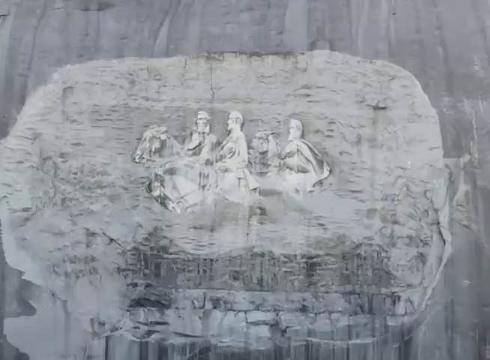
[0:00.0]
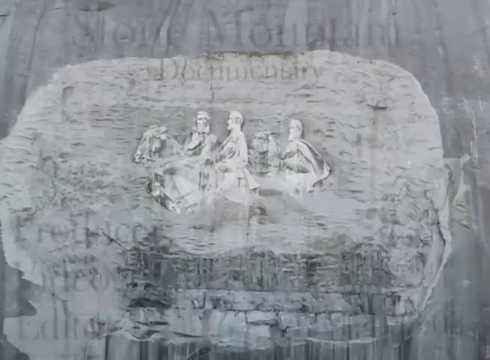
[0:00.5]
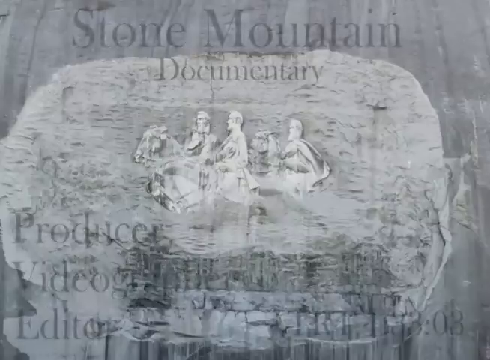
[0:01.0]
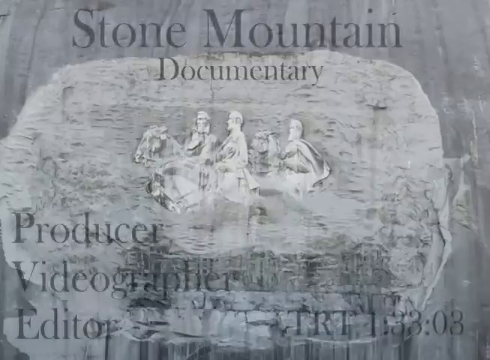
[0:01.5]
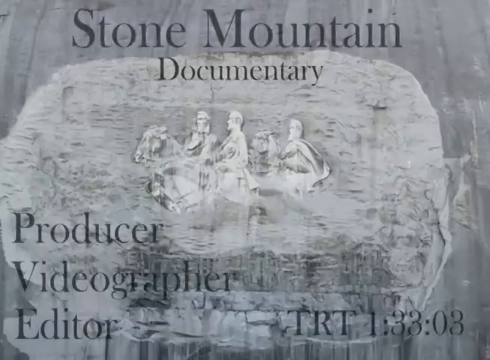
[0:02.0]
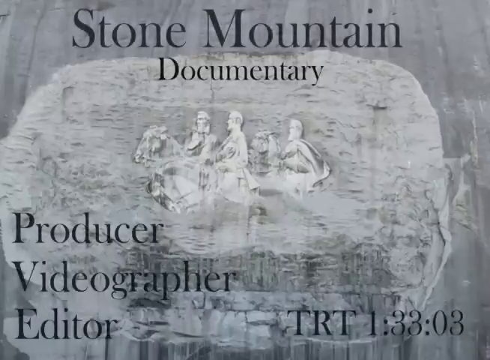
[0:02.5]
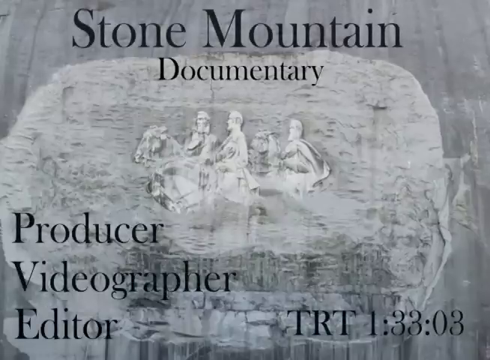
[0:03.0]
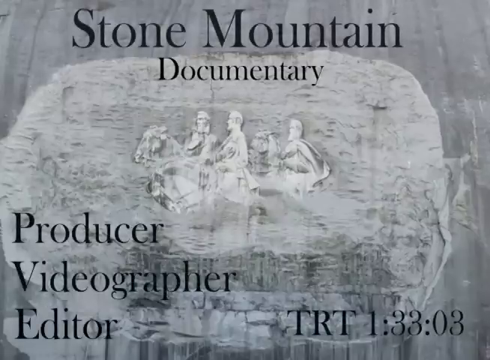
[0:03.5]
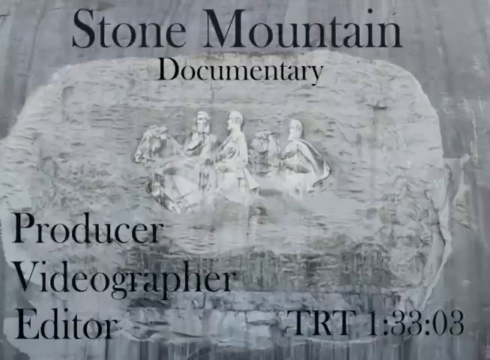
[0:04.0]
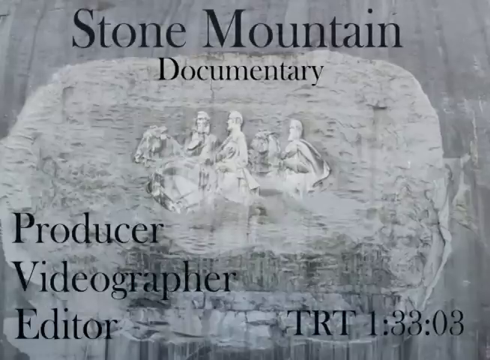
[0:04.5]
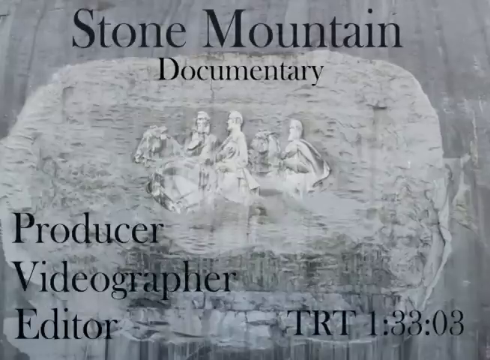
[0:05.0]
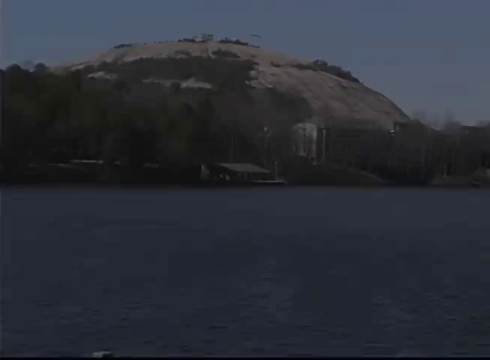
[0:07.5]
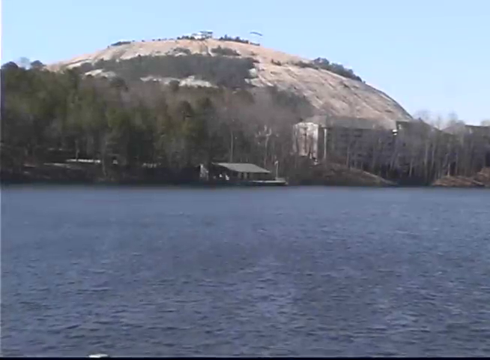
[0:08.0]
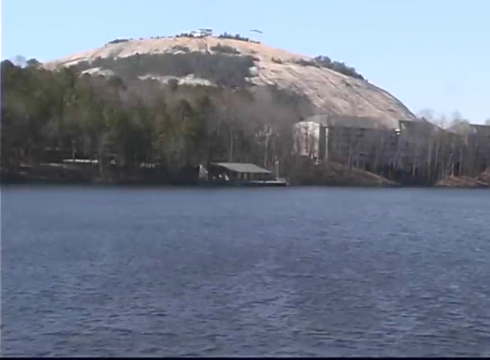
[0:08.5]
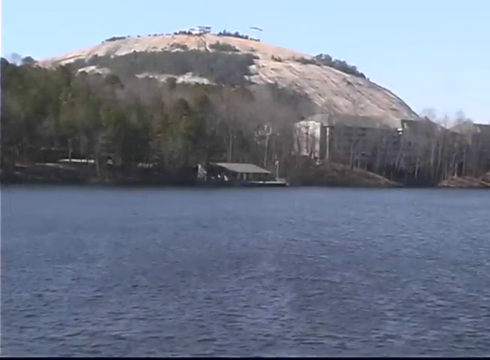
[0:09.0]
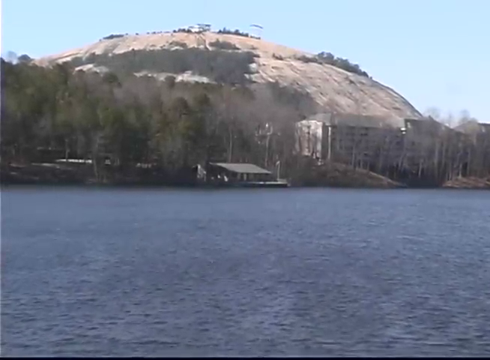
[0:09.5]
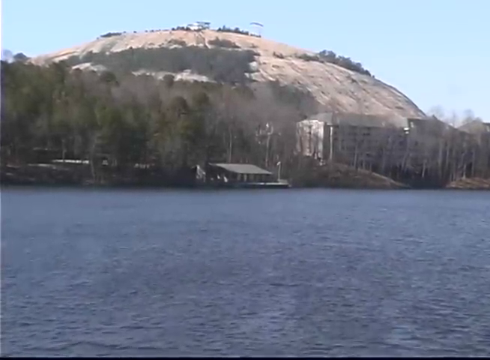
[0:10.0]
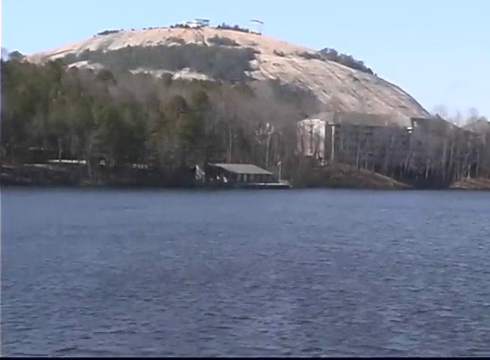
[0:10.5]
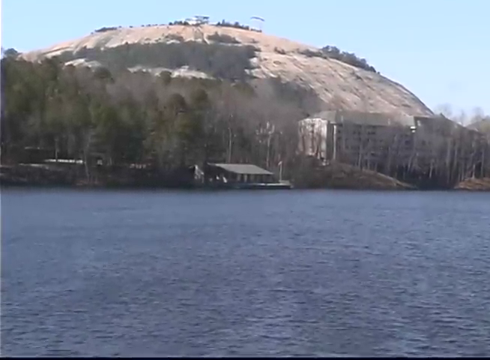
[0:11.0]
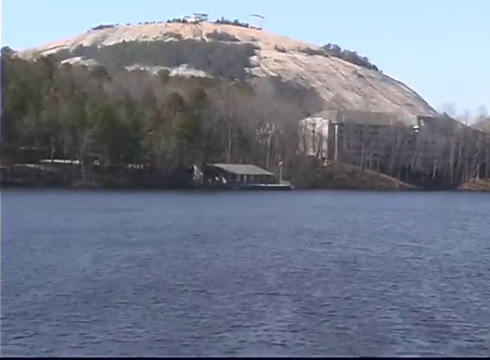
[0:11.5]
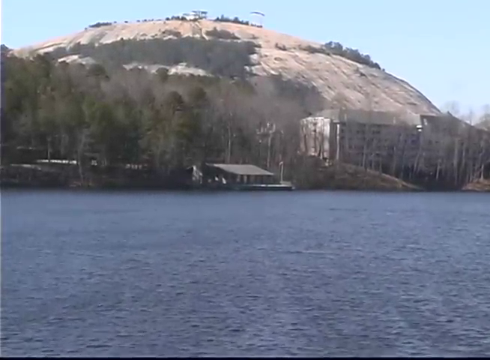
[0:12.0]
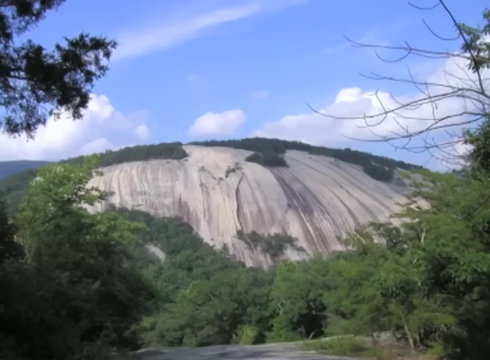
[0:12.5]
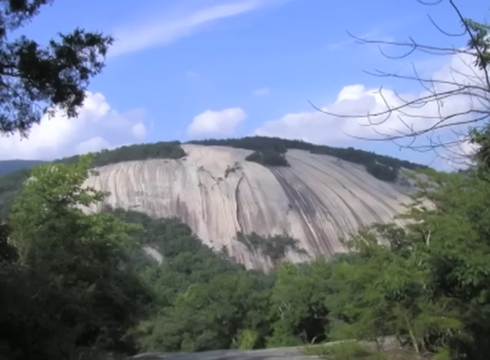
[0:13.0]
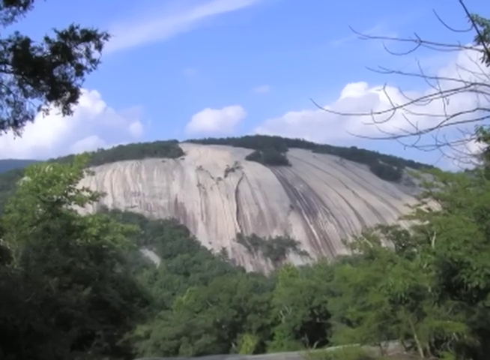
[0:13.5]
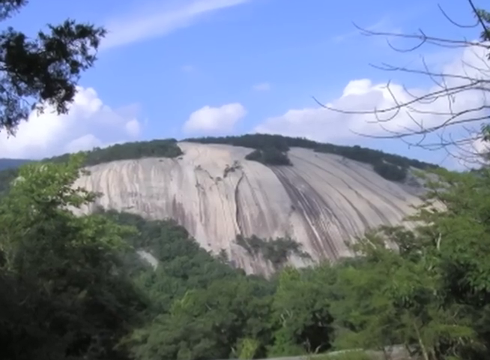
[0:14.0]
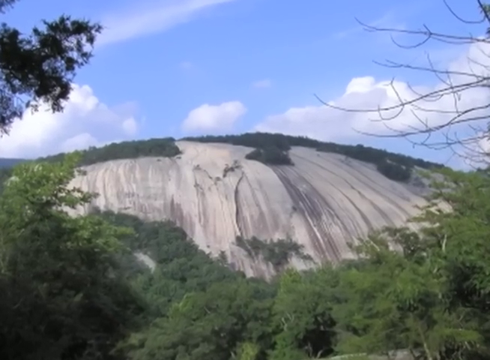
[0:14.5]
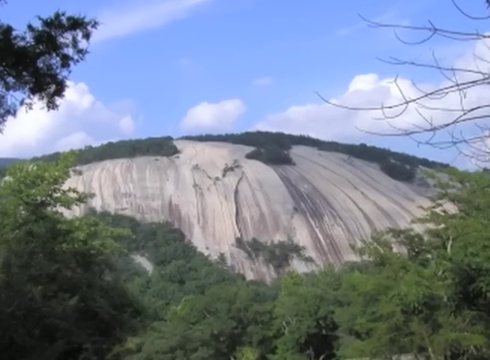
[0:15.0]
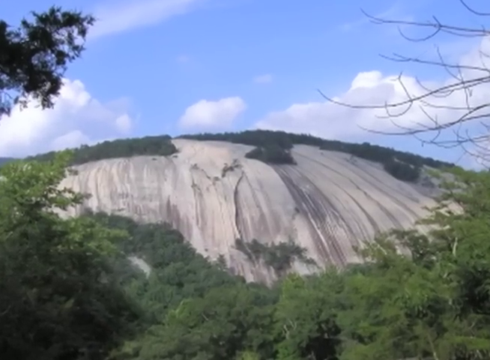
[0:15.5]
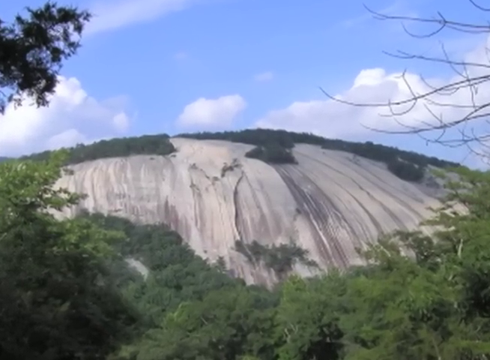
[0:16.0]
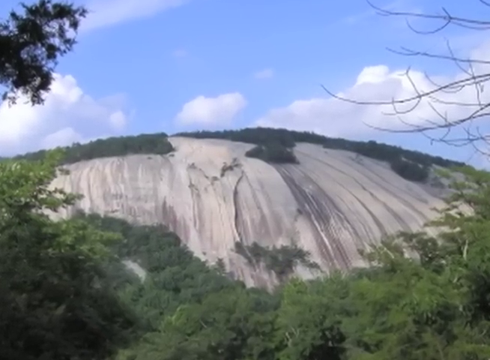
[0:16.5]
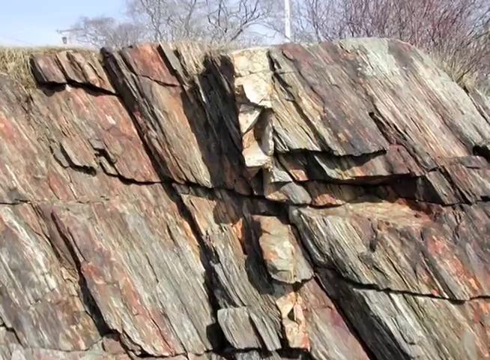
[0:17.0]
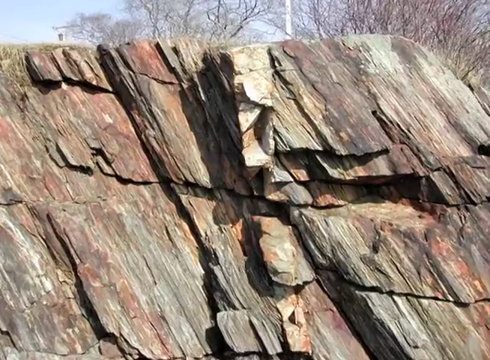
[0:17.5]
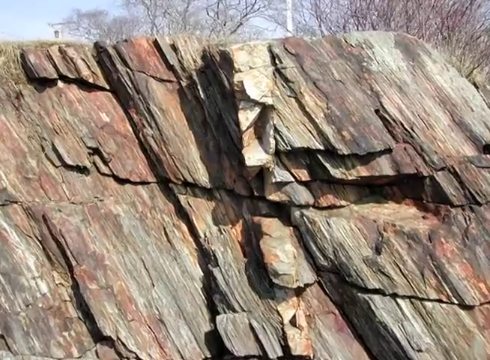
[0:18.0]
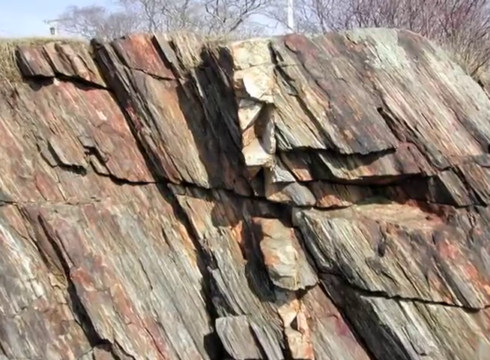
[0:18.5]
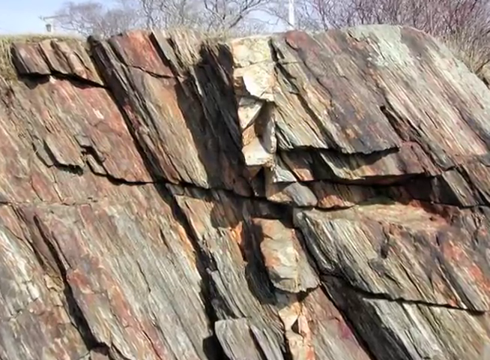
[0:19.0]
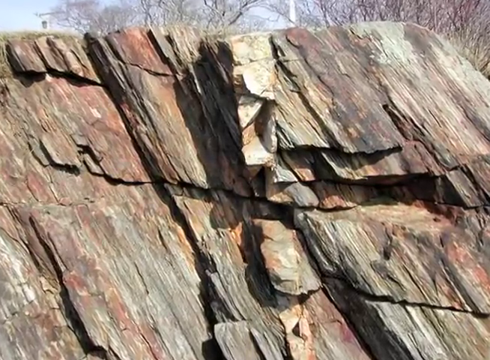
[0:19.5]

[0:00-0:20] A white and gray image shows three or four people who may be soldiers. Words come into view reading "Stone Mountain documentary producer, video, videographer"; a name is also shown, but it is hard to see. The picture fades to black. Next comes a view of what is almost like a mountain with buildings on top, a river with a deck by the river, a lot of water, and a clear sky on a sunny day, possibly morning or mid-afternoon. Another view follows of something that almost looks like snow but is not; the grass is like hair on a head around a balding spot. There are a few more clouds in this view, and some trees are visible. The shot then focuses in on a rock that almost looks like the scales on a fish, though it is stone, with some trees behind it that have no leaves.